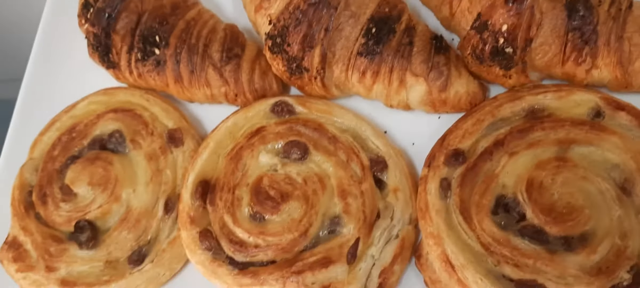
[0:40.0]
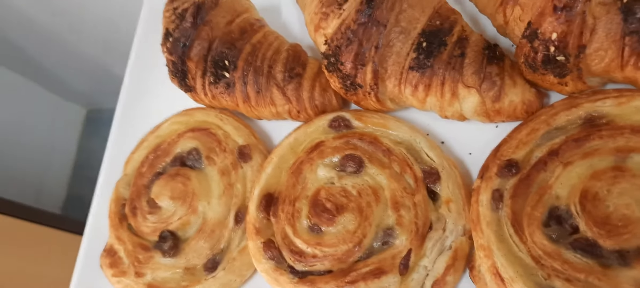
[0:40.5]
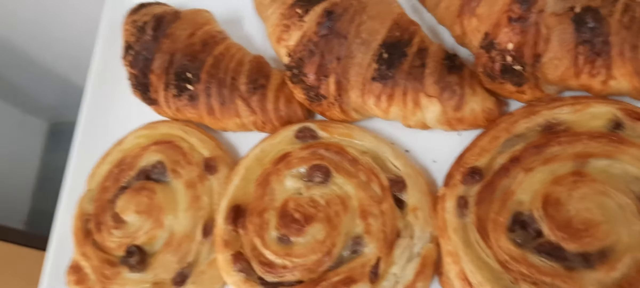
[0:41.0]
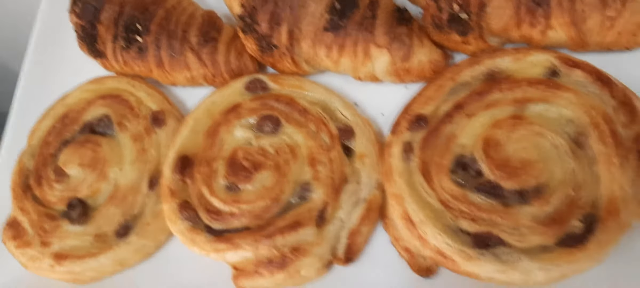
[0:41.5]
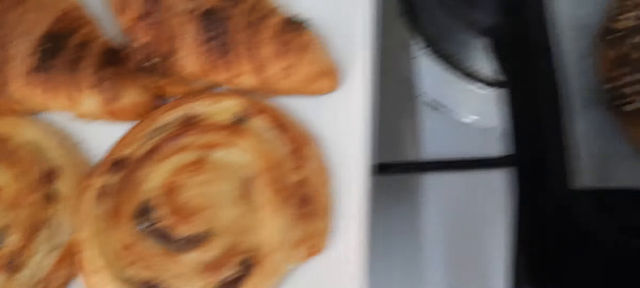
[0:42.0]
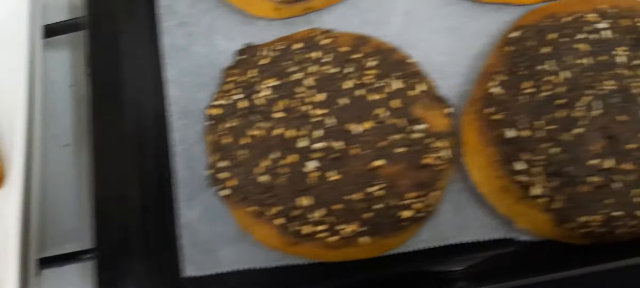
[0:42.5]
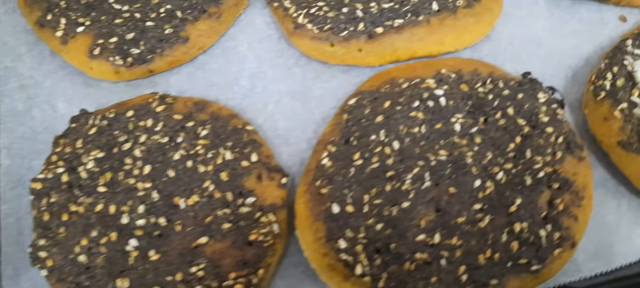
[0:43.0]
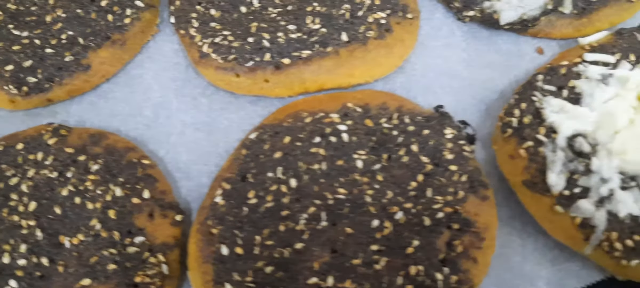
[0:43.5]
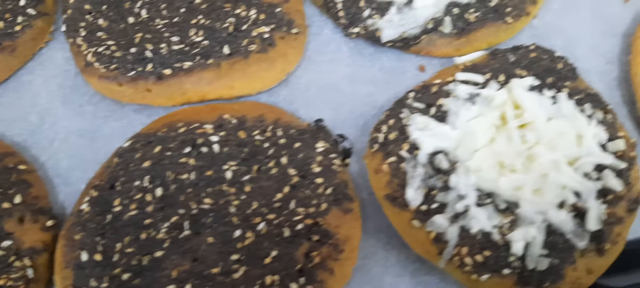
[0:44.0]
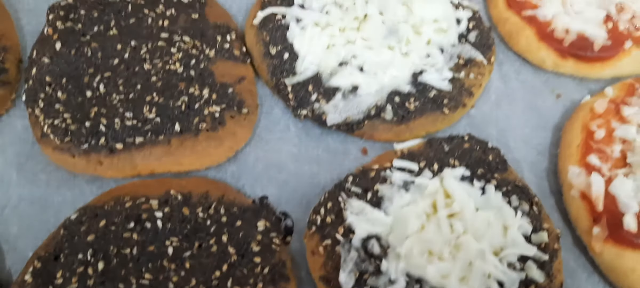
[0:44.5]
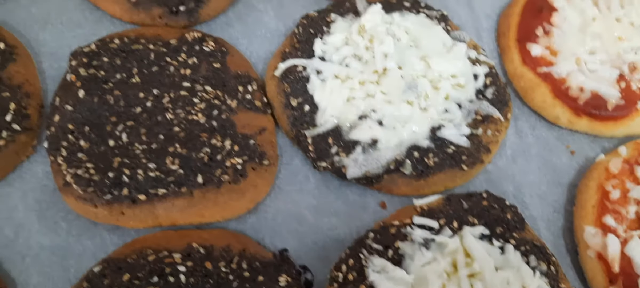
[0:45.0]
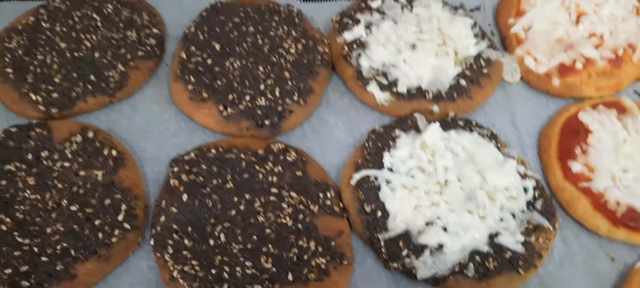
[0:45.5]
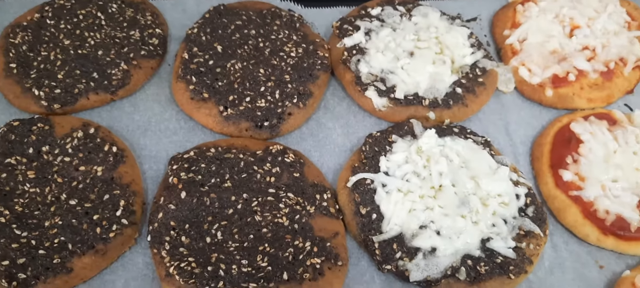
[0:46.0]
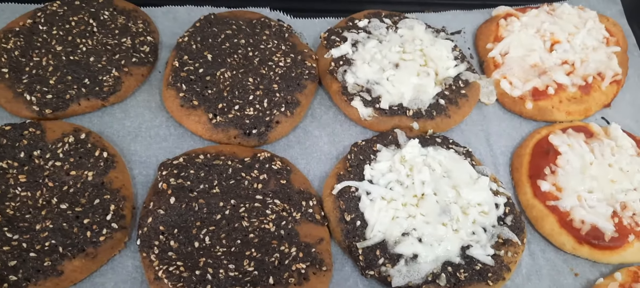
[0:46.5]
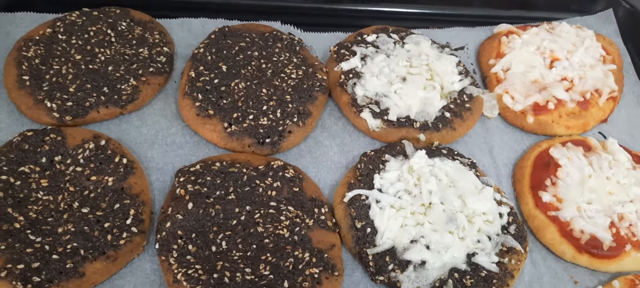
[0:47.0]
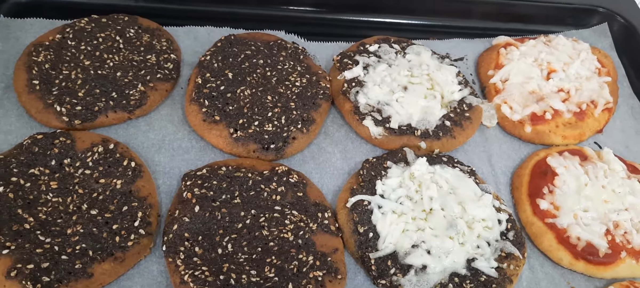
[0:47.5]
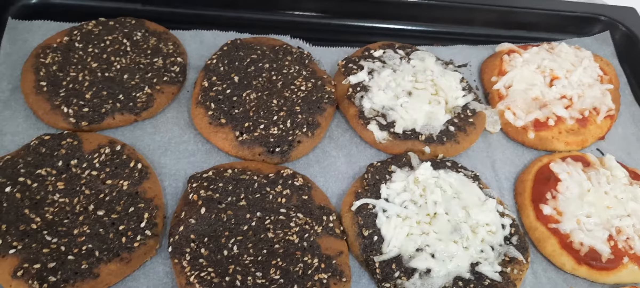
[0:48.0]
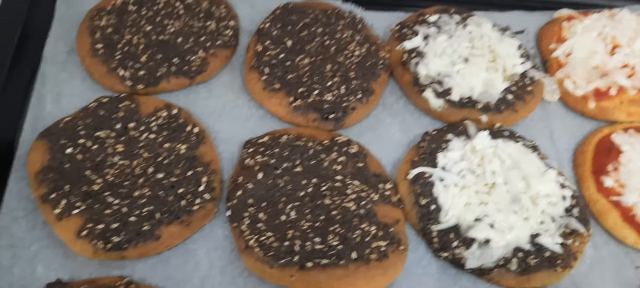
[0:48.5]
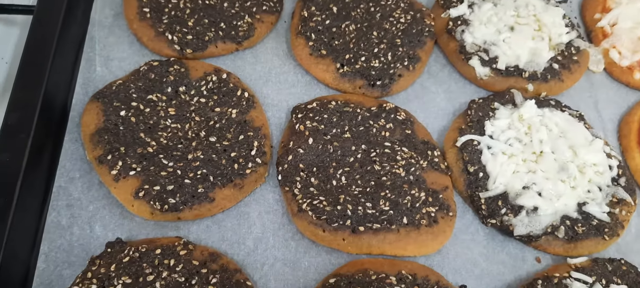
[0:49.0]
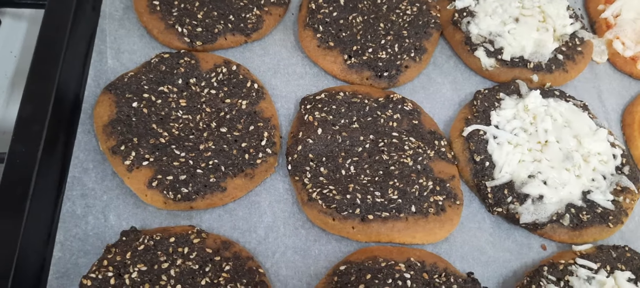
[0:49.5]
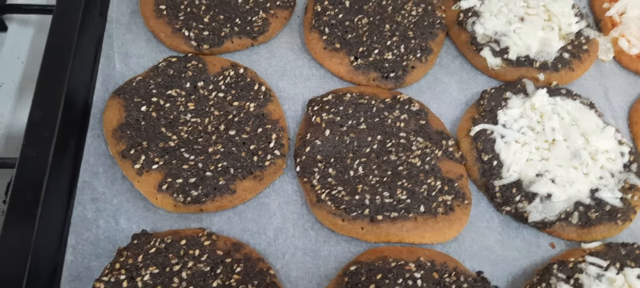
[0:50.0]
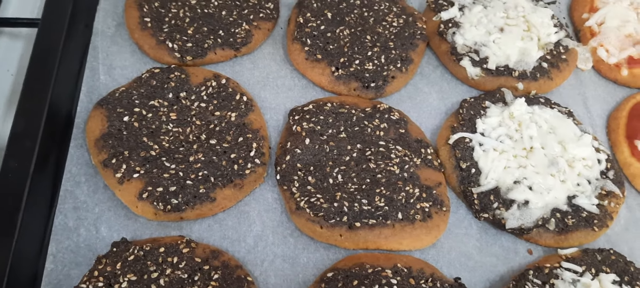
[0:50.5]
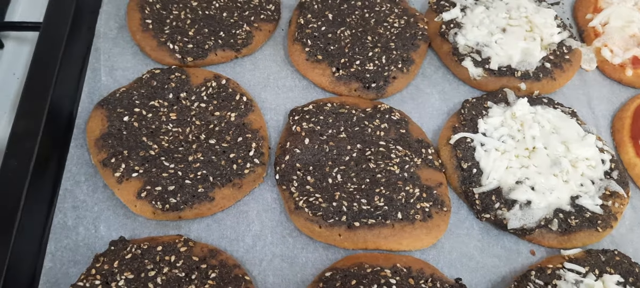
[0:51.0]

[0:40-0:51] A square white platter has three crispy croissants at the top that are dark brown, light tan and light brown. Underneath is a row of three swirl-shaped sticky buns topped with little brown circles that are either raisins or chocolate chips. The person with the camera pans to the right to another pan with brown cookies laying on it. The first row has brown icing on top. The second row is the same cookies with chopped-up white topping that looks like coconut. The third row is a lighter colored sugar cookie topped with orange icing and coconut. It is laying on a sheet of wax paper.